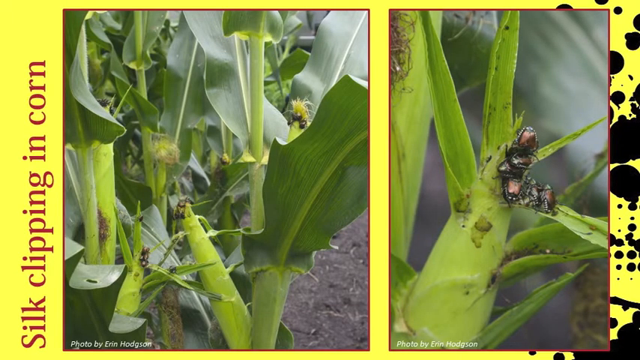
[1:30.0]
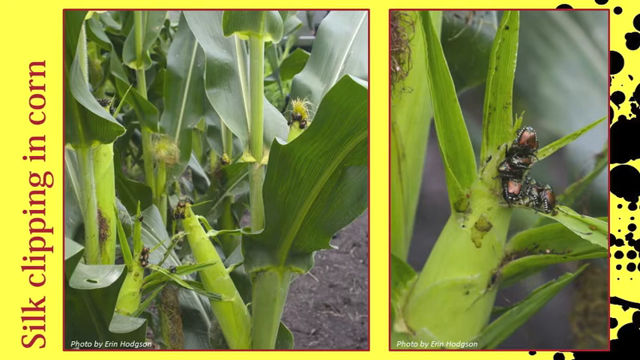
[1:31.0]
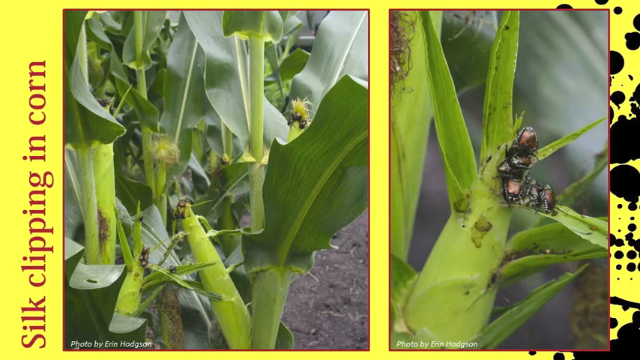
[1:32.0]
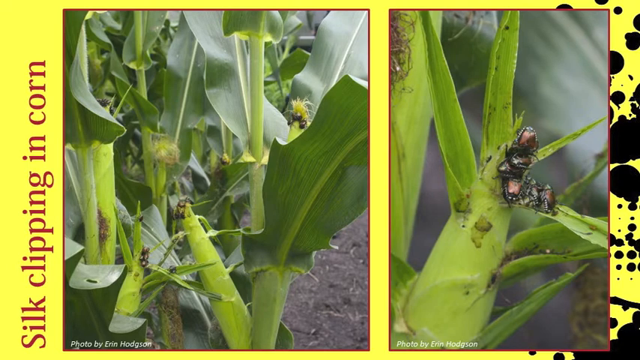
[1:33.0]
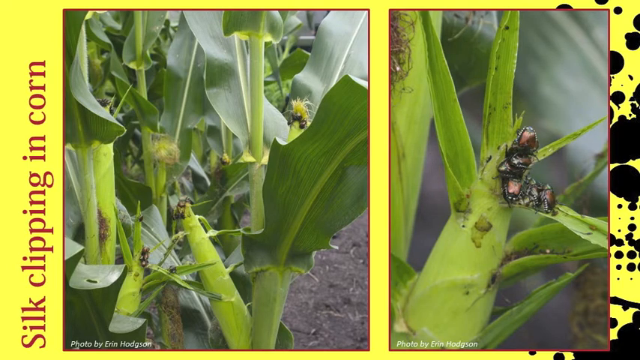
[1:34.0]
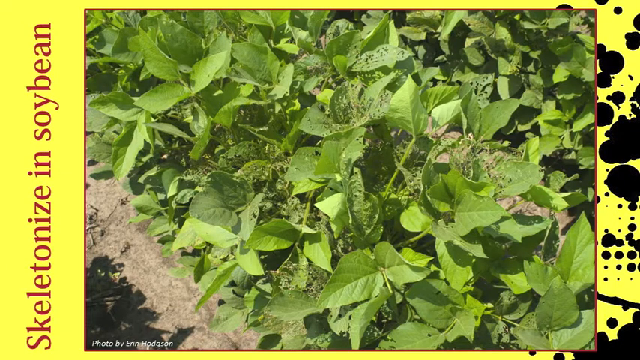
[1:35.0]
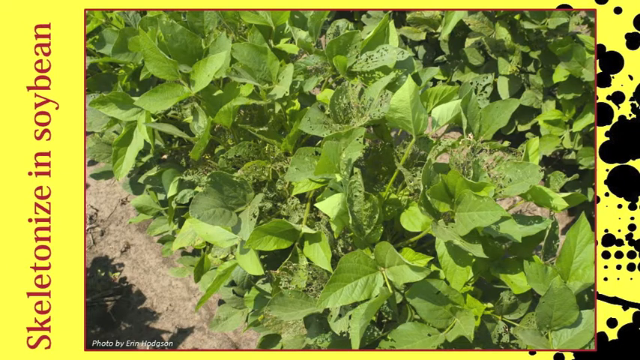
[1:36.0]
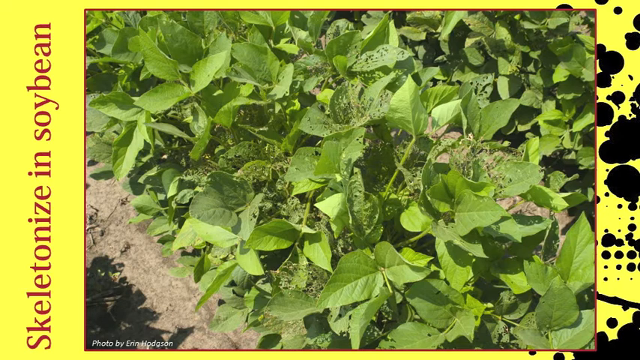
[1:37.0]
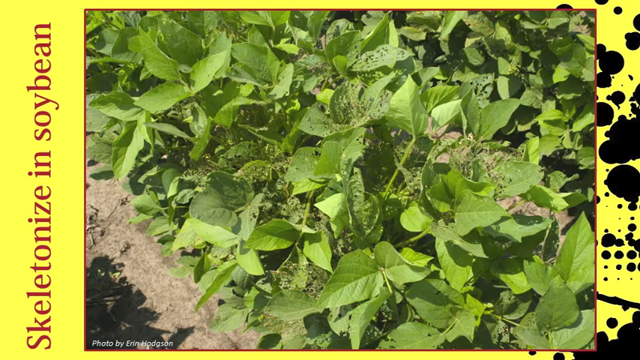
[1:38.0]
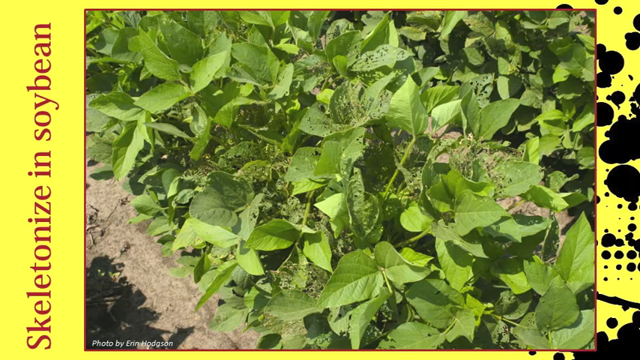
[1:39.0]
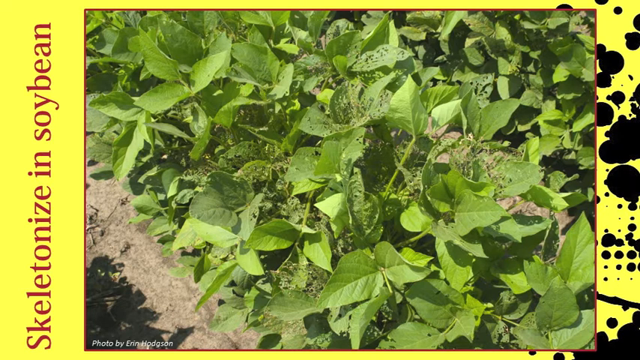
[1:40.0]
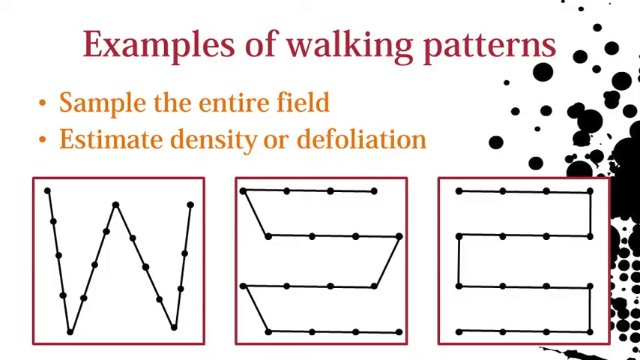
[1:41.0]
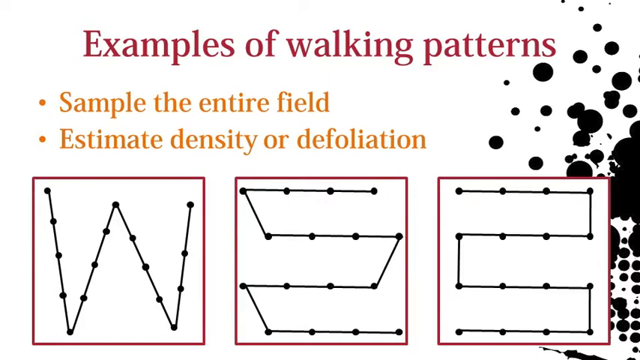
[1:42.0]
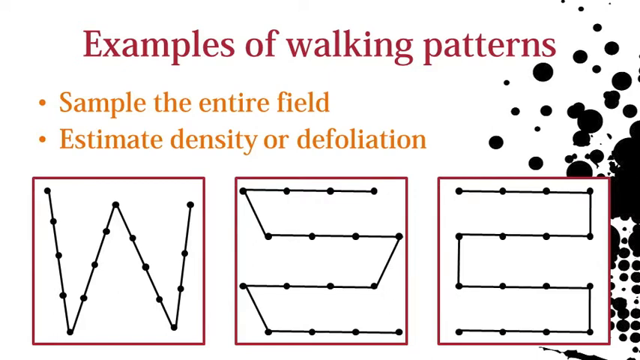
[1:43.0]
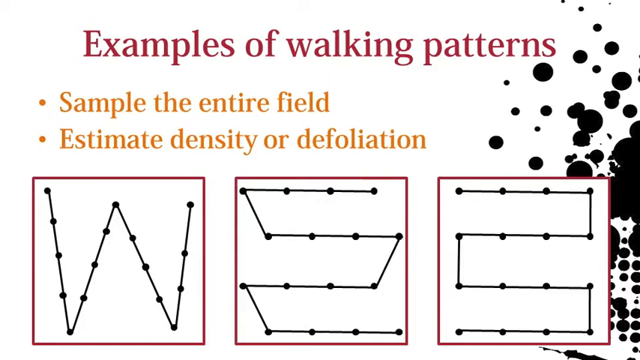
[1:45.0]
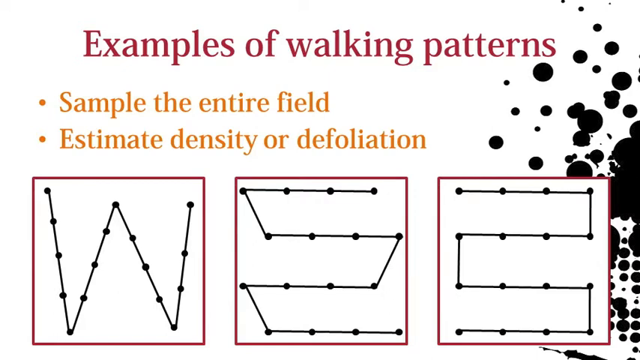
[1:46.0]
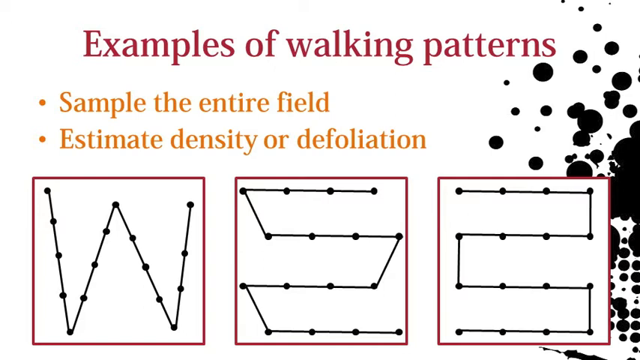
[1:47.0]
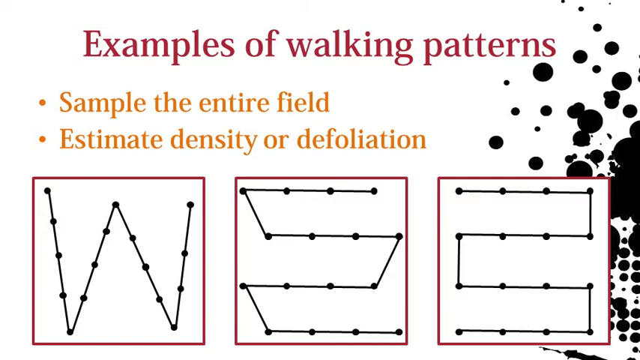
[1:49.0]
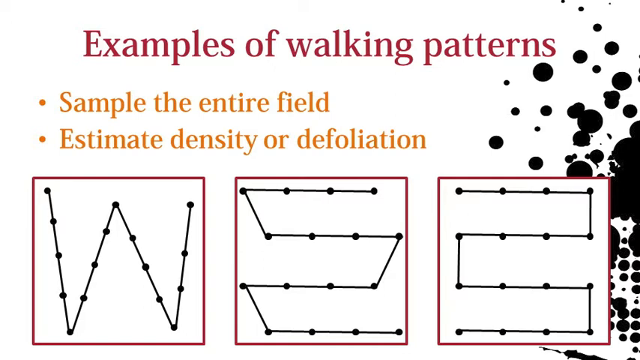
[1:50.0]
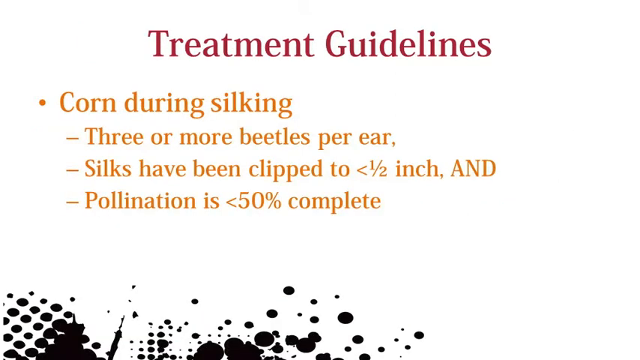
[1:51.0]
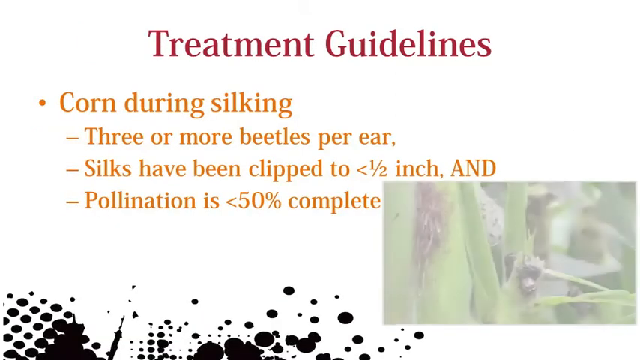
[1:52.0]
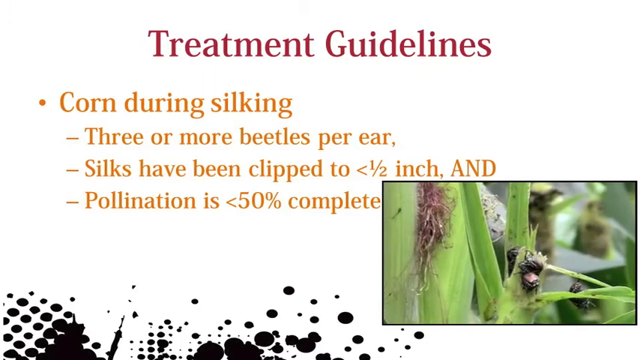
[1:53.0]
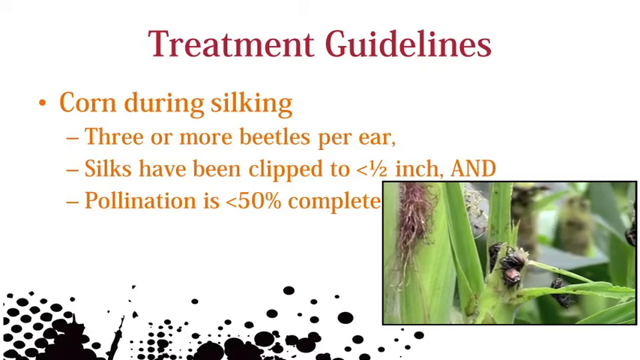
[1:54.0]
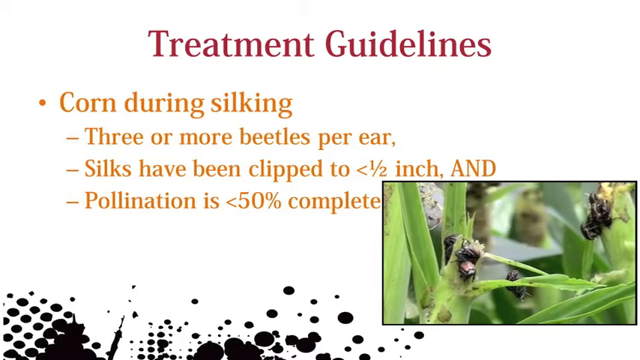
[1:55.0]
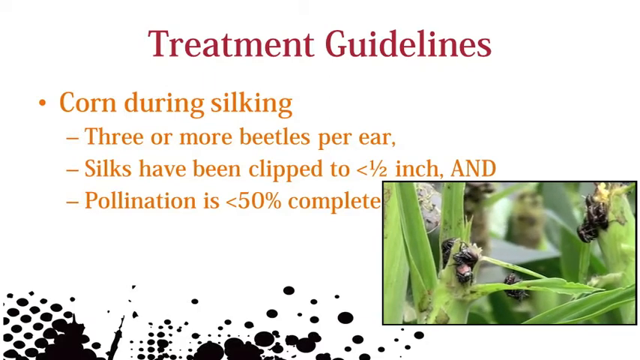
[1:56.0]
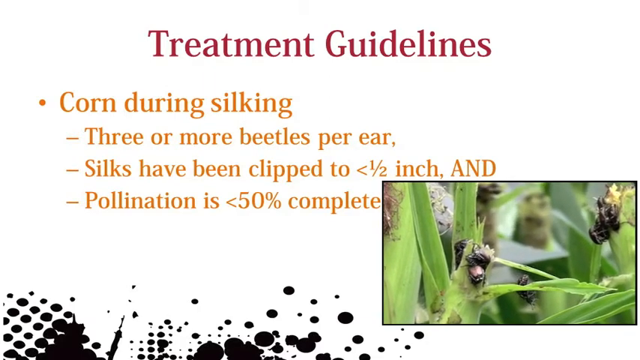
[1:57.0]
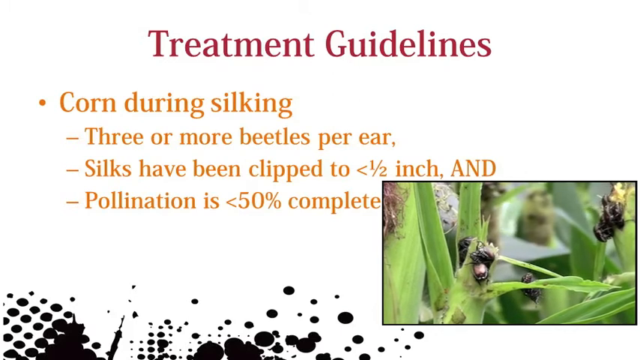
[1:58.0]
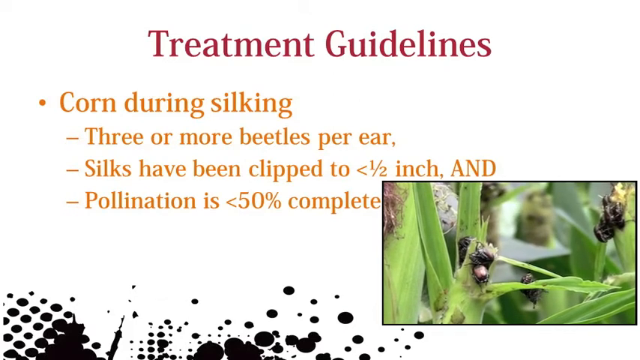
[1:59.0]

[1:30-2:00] A page about what looks to be silk clipping in corn shows two images on a yellow background. They show what look to be green corn crops, with the beetles eating at them and killing them. Another picture is labeled "skeletonized in soybean" and shows green soybean plants with the beetles eating and biting at them, leaving parts that look quite dead. The video cuts to a new page reading "examples of walking patterns," "sample the entire field," and "estimate density." Three images below show what look to be red squares with lines in them; the lines make a W, and the middle one has an S-like line.